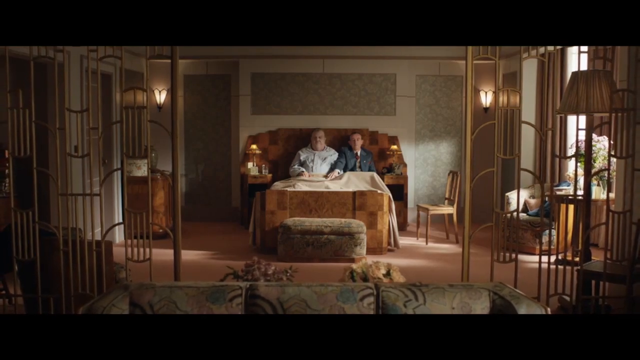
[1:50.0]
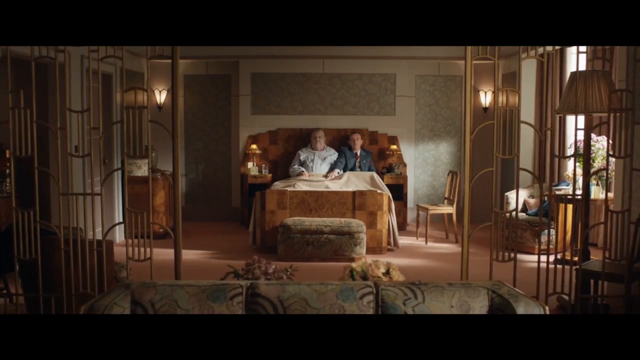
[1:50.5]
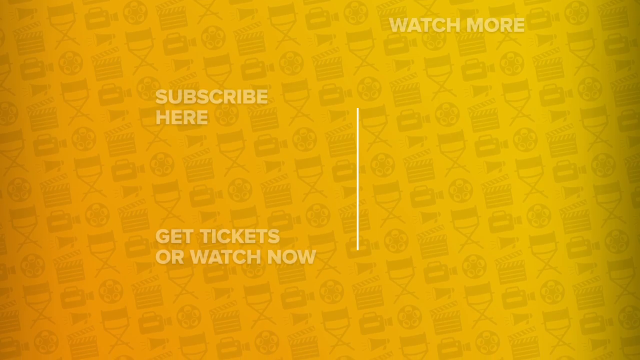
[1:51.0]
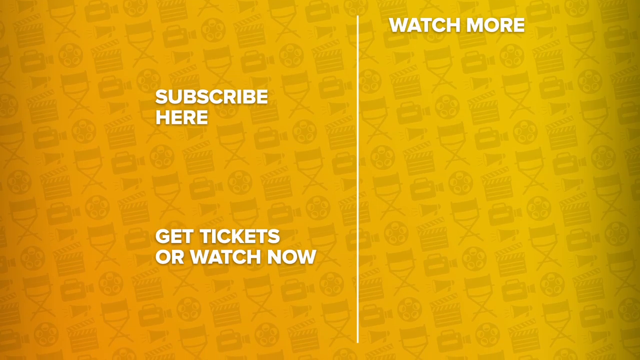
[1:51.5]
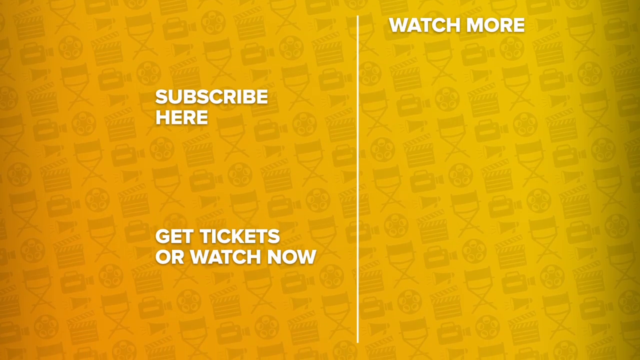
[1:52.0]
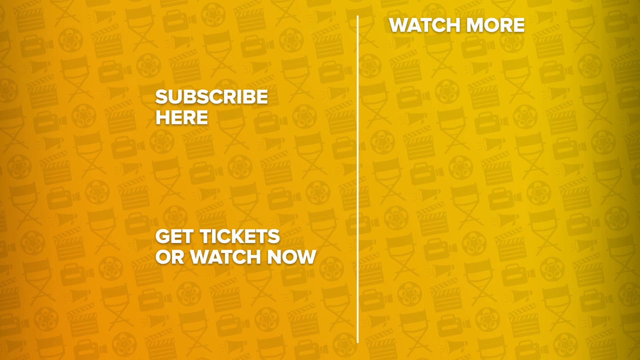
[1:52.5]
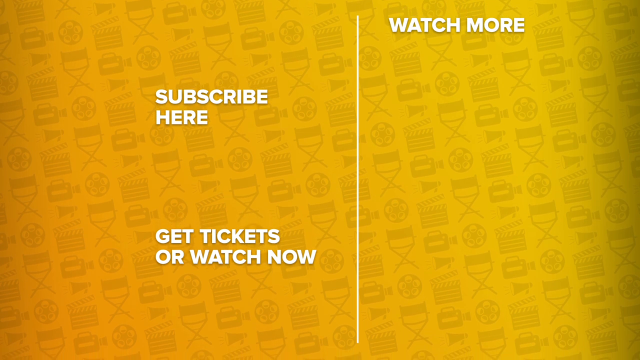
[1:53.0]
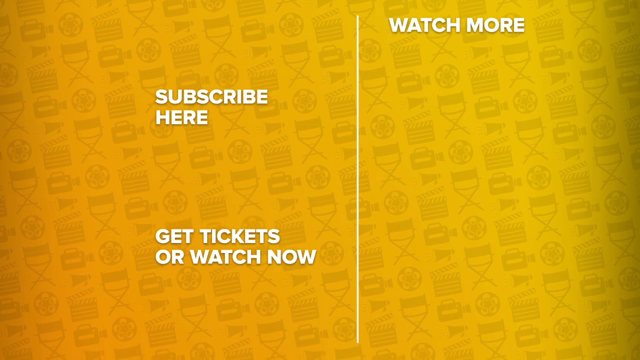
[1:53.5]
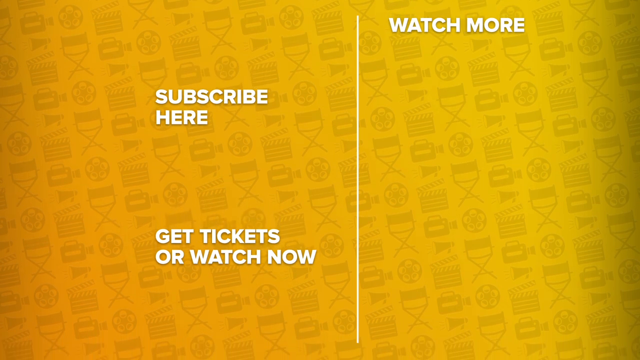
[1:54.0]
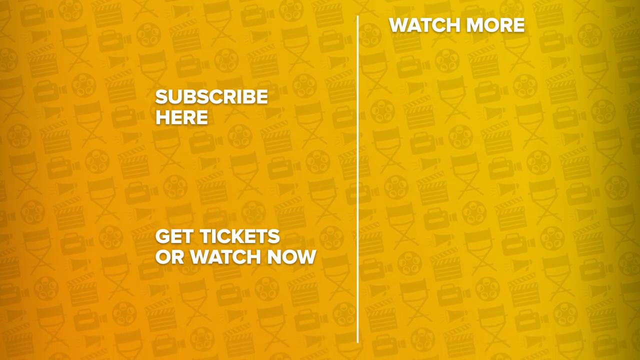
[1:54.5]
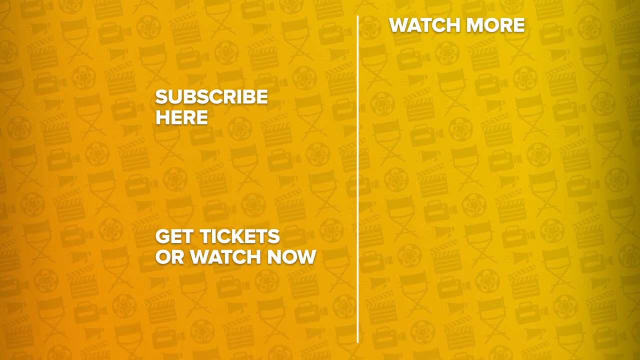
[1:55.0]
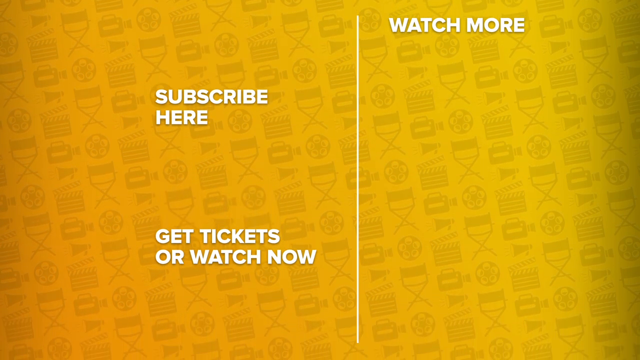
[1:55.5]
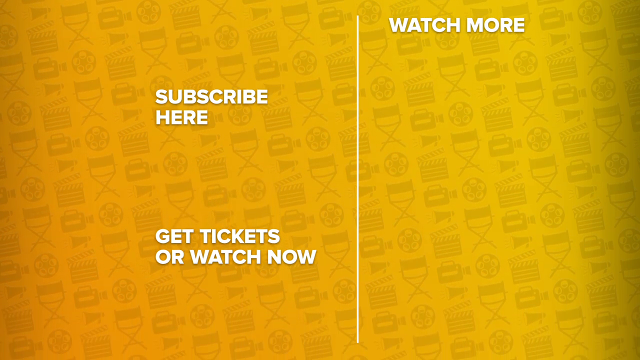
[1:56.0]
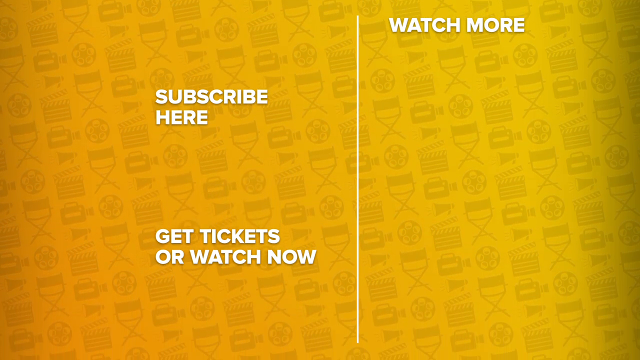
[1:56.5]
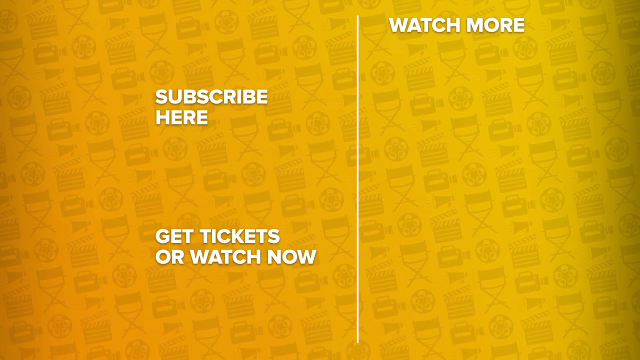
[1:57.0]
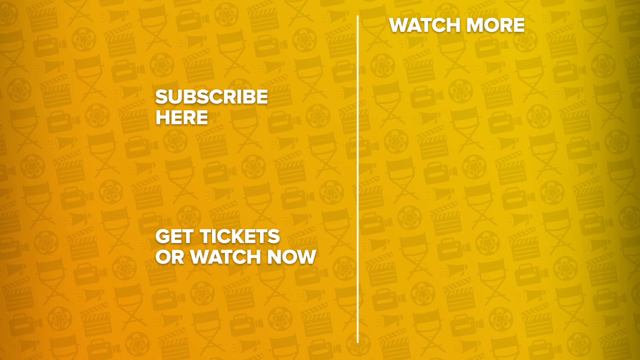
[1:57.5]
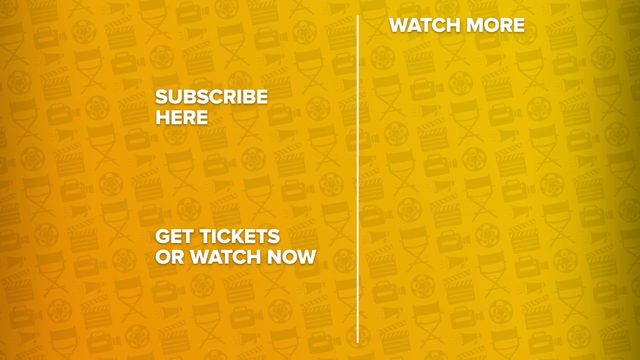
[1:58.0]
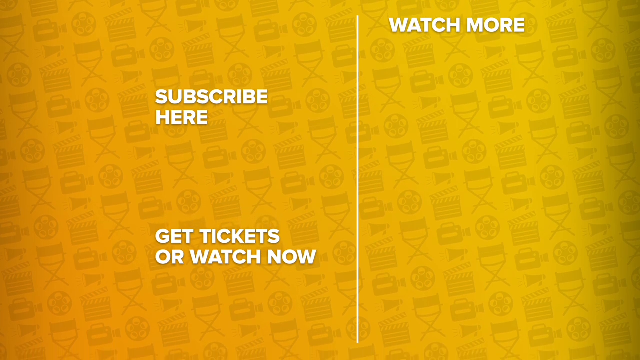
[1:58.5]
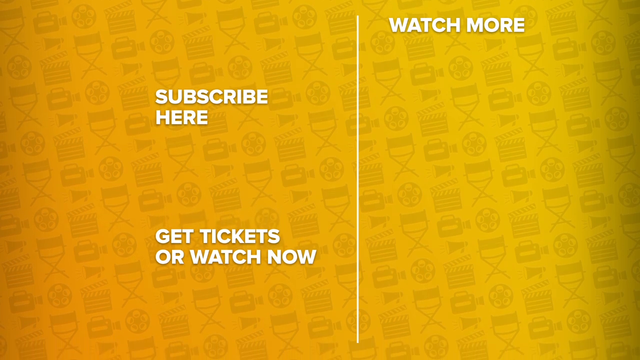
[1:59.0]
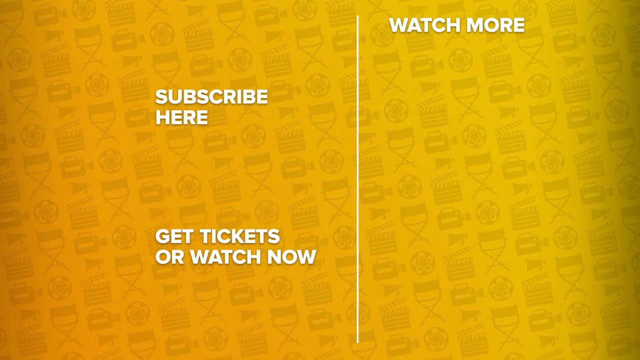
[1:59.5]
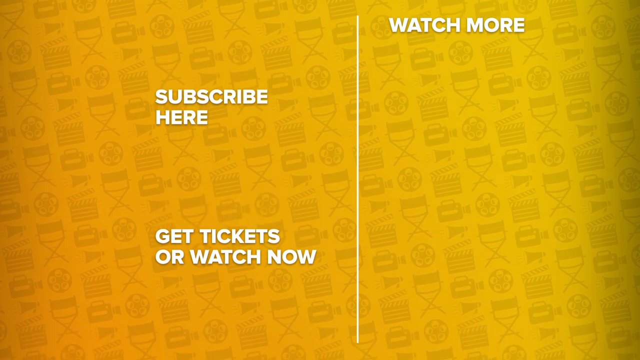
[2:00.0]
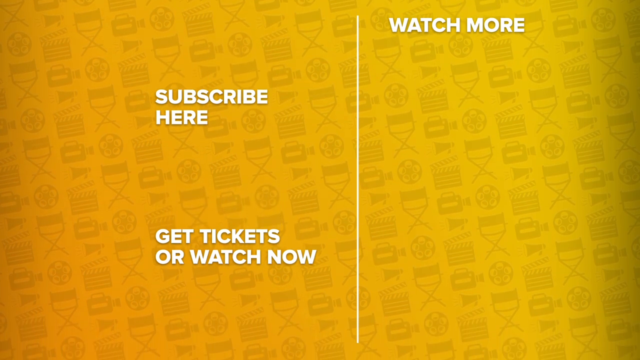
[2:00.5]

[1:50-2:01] The bedroom is shown with the two men lying in the bed. Behind the bed is a white wall with gray rectangular panels, and matching lights are on the wall on both the left and right sides of the bed. On the right side of the room, an open window reveals sunlight and green vegetation, with an armchair underneath it. On the right side of the screen is a golden lampstand about 5 feet tall with a white lampshade. Peach-colored carpet covers the floor. At the entrance to the bedroom are golden bars of what appears to be brass. A couch is in the very front of the image, with two potted plants slightly behind it. The video then transitions to a moving yellow background revealing images of directors' chairs and cameras, with "WATCH MORE" in white in the upper right corner, "SUBSCRIBE HERE" in white lettering at the left center, and "GET TICKETS OR WATCH NOW" in white lettering in the bottom left corner.